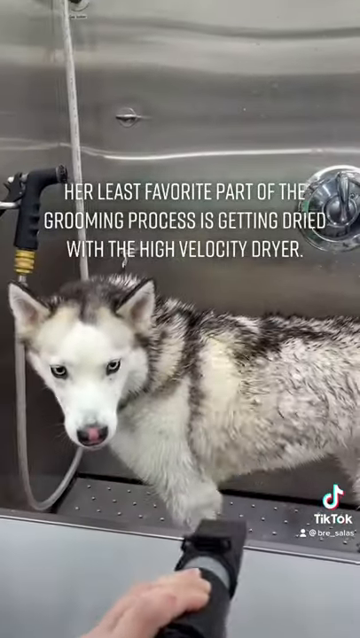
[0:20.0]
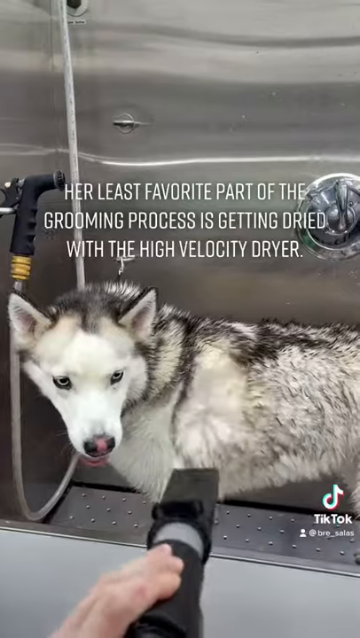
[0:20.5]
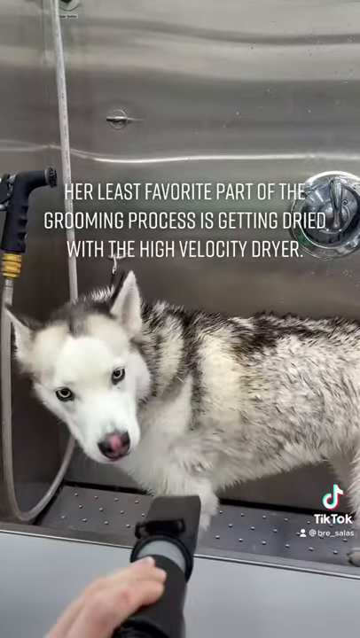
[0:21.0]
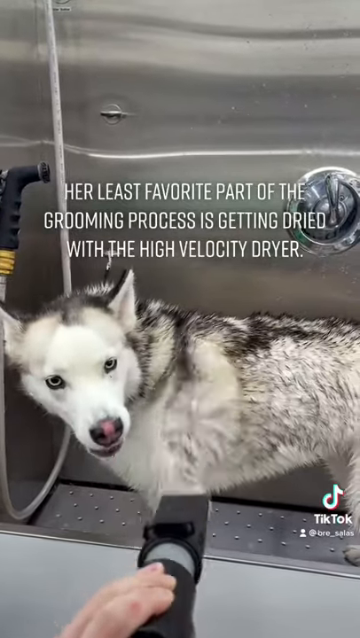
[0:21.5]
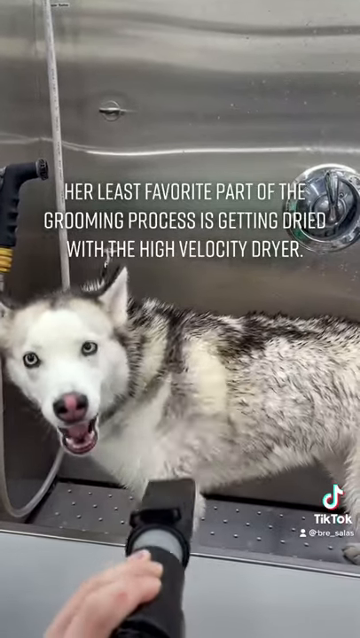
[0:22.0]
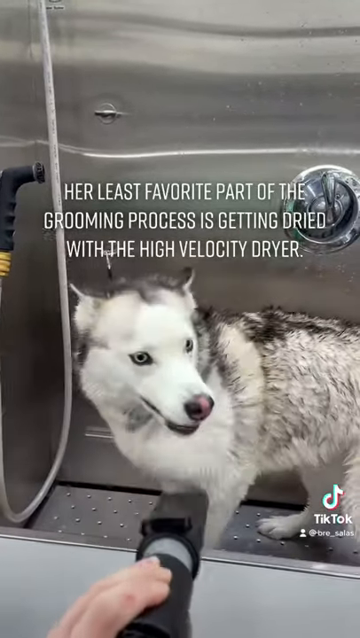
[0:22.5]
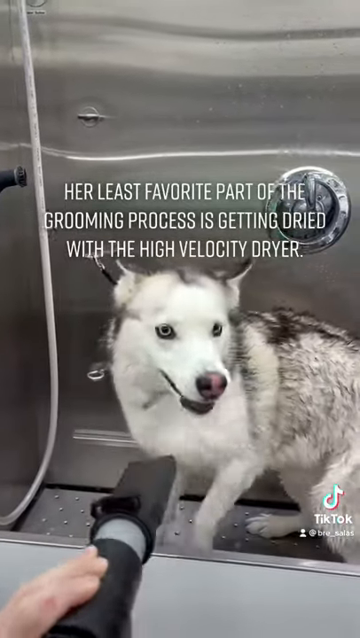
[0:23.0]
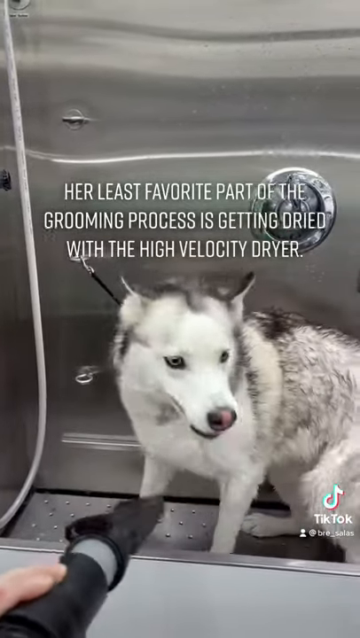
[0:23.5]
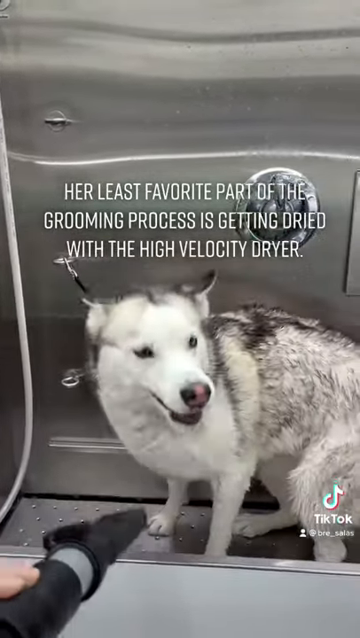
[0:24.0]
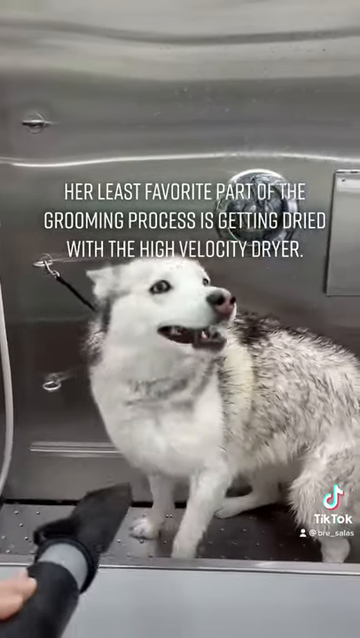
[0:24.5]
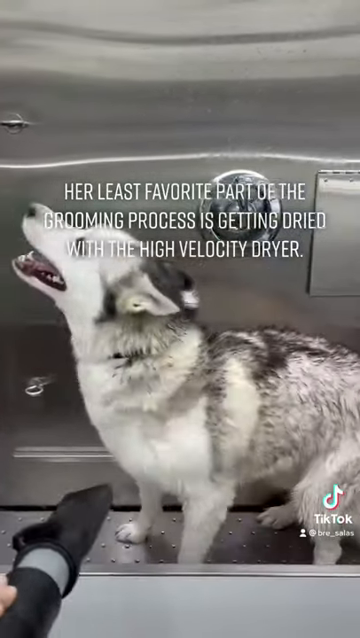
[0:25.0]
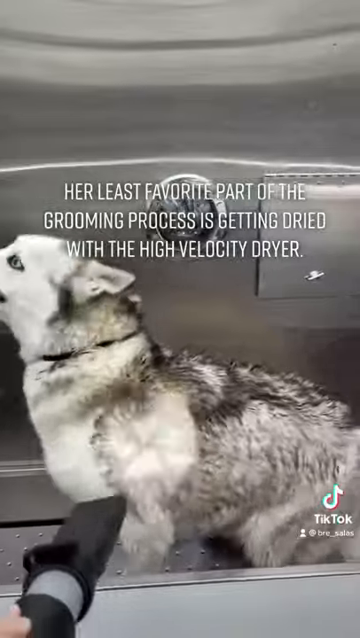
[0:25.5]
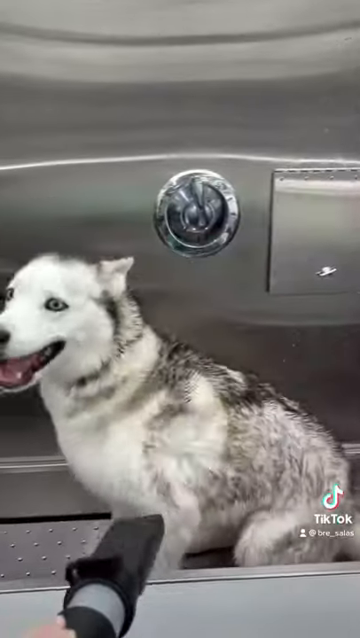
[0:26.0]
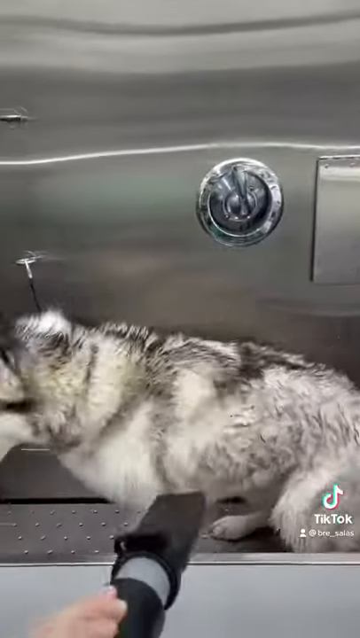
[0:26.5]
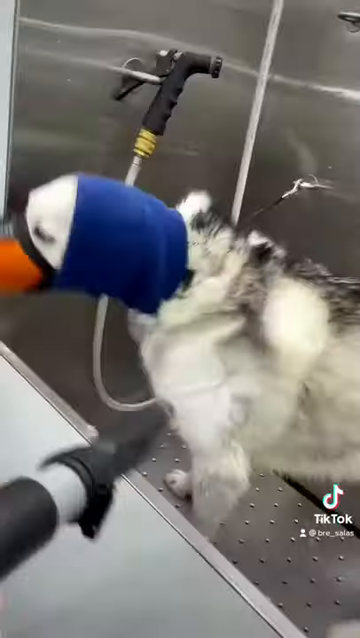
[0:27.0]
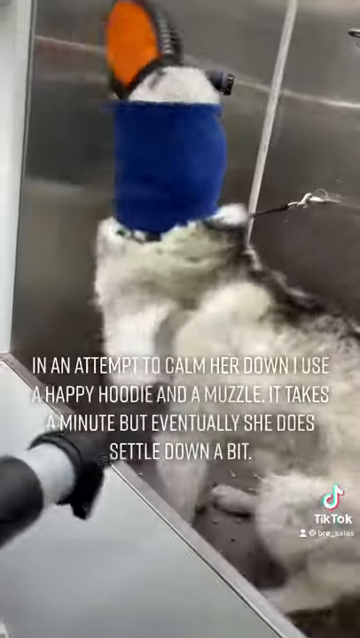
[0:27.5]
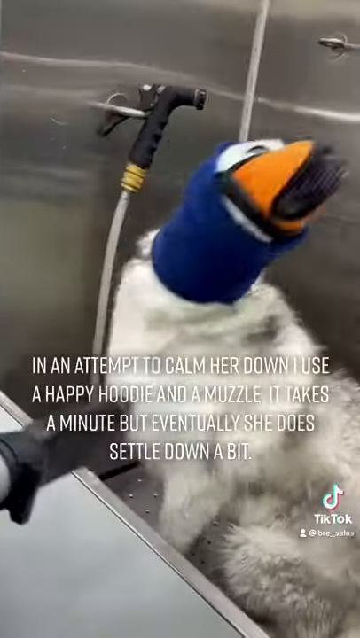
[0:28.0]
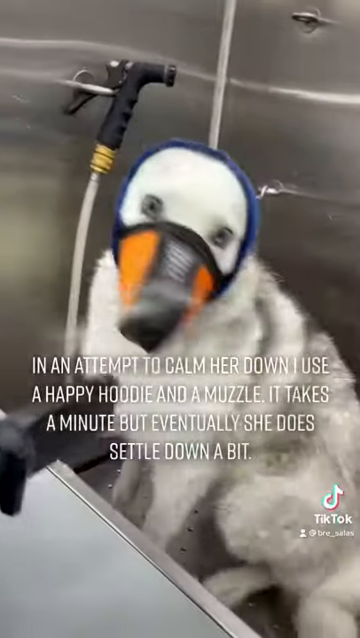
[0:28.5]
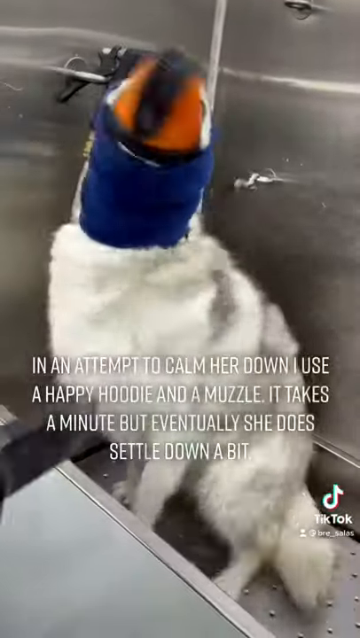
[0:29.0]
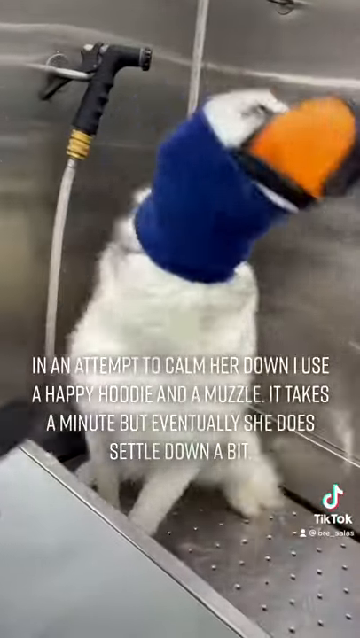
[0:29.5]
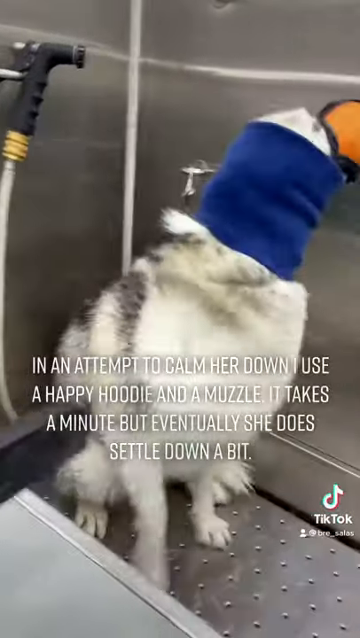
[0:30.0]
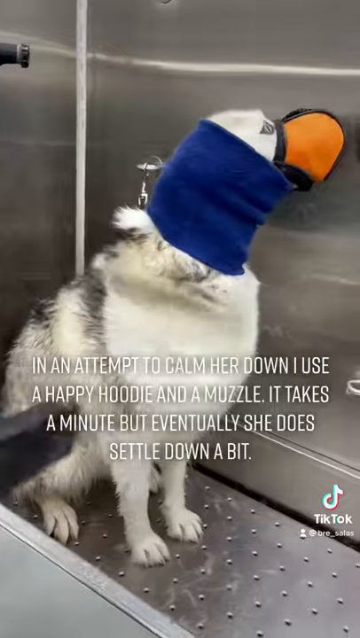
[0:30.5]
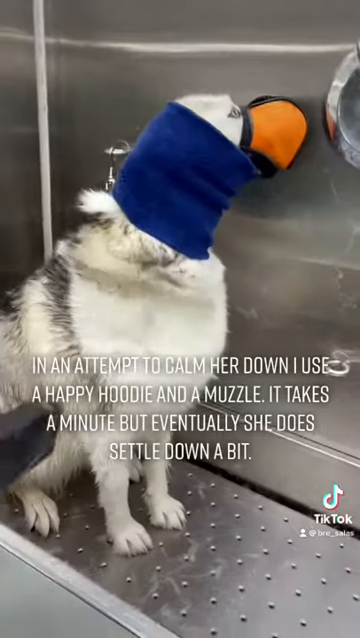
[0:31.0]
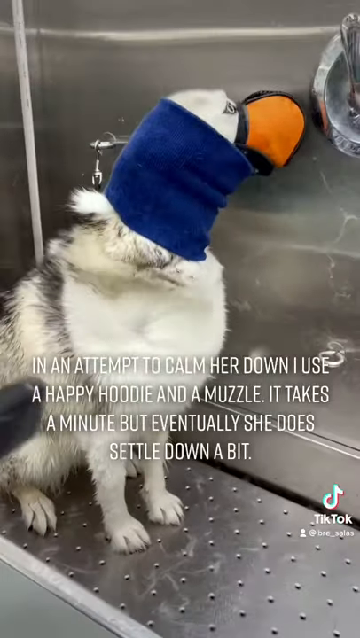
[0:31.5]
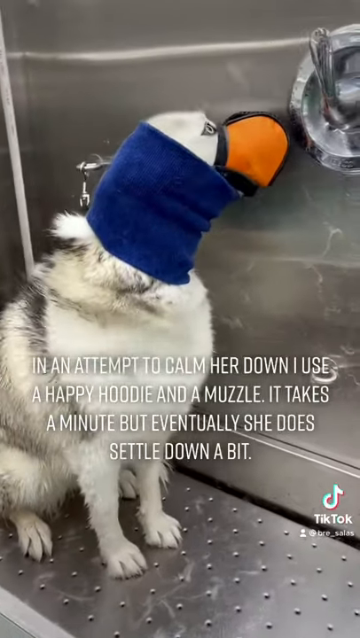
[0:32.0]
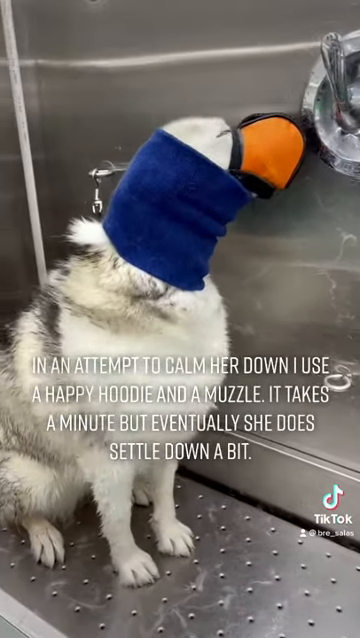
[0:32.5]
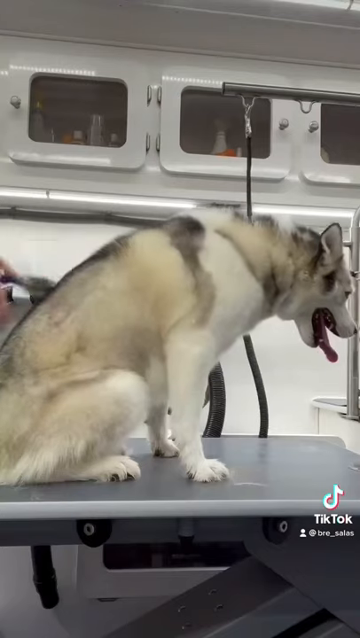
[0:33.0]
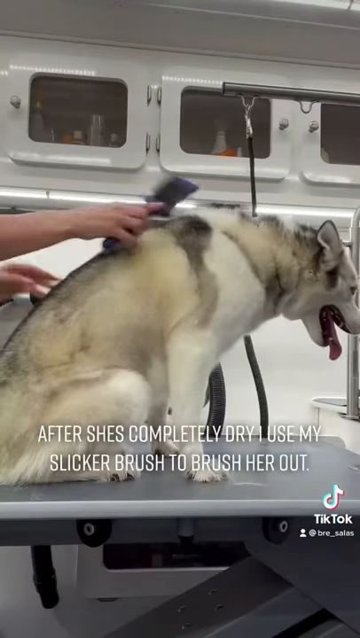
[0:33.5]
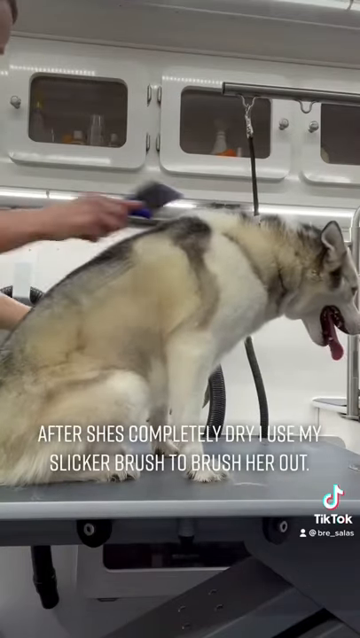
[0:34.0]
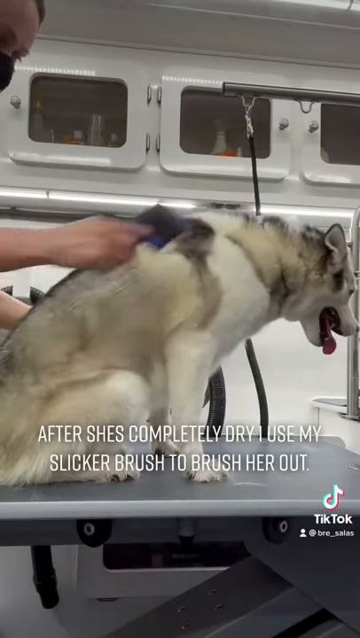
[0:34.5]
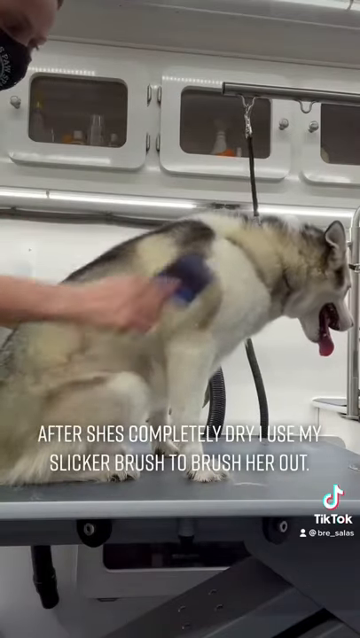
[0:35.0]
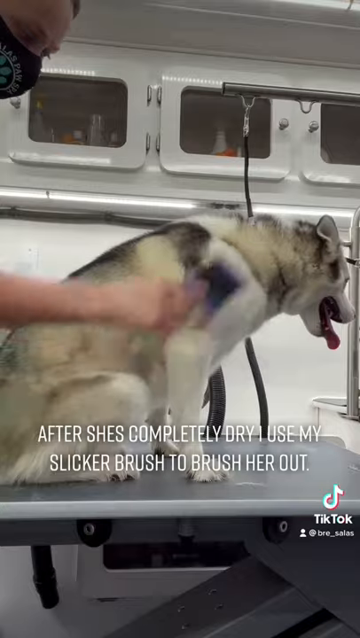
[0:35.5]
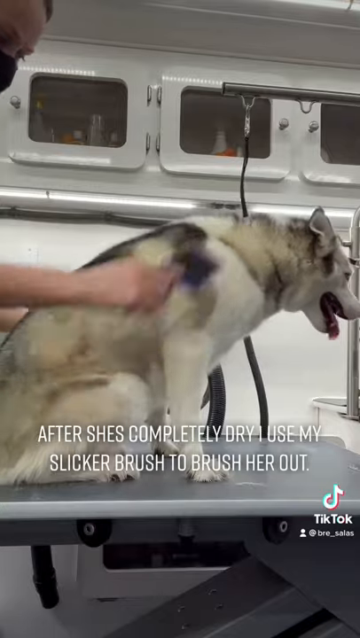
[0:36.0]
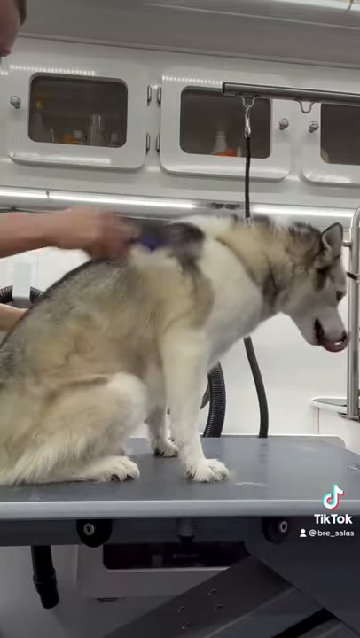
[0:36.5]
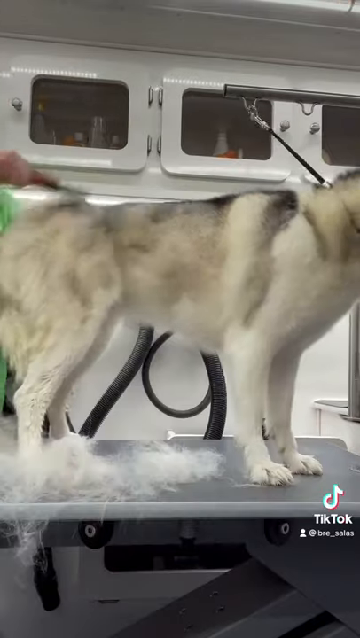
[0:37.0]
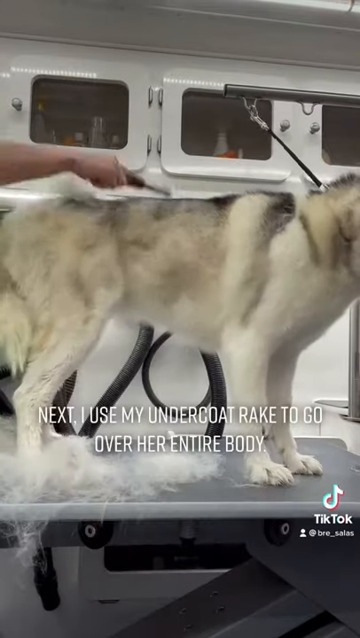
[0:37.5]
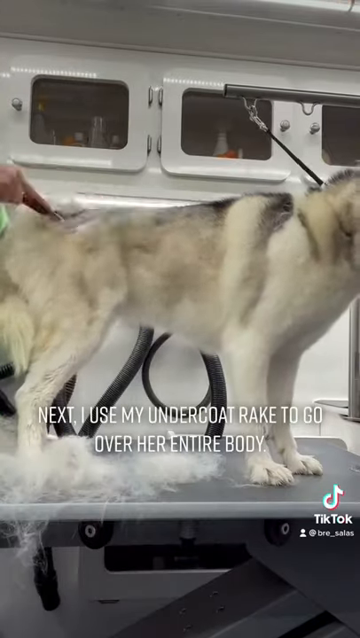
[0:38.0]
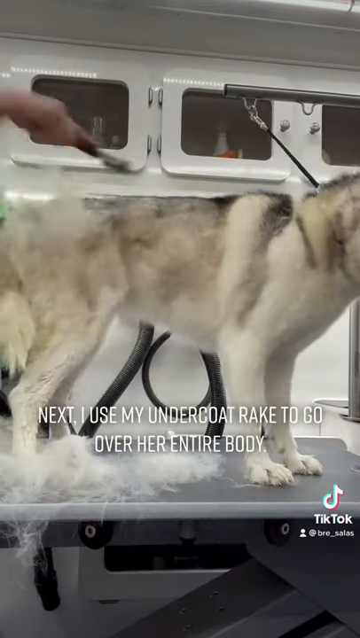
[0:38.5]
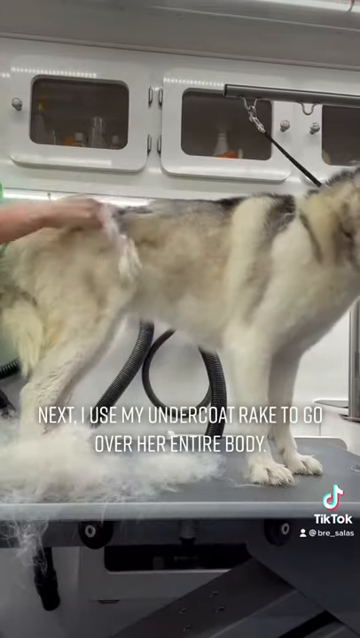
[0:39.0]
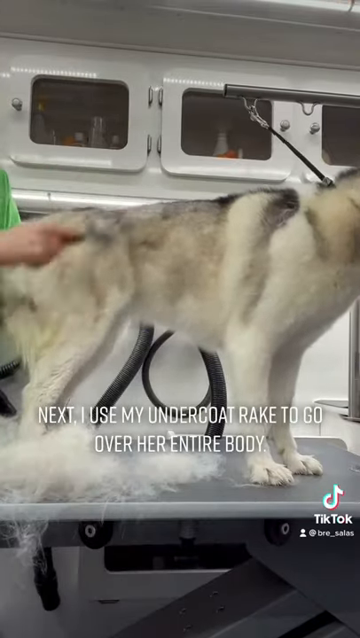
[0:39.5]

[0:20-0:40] A Siberian husky is being groomed by a vet, with its fur coat dried by a high-velocity blow dryer. At some points the dog wears a mask. The dog reacts to the dryer with impatience, walking back and forth and trying to get out of the situation, but it gets through it with a smile on its face.